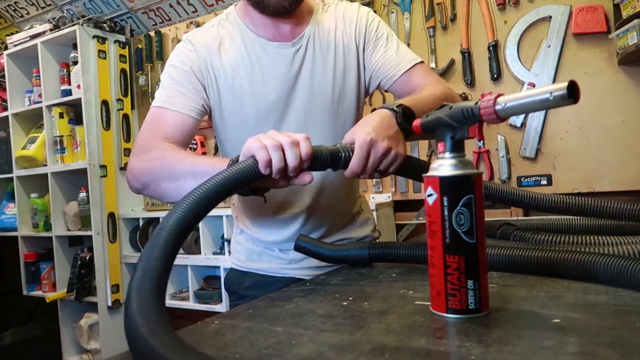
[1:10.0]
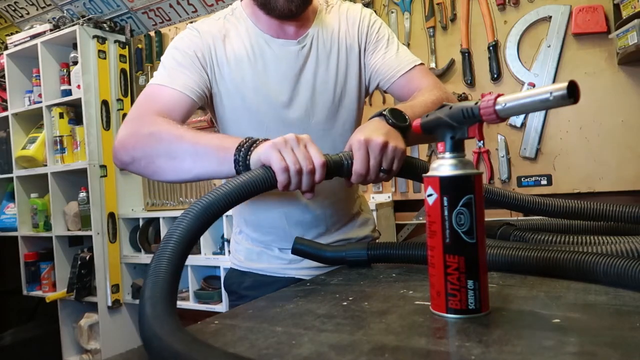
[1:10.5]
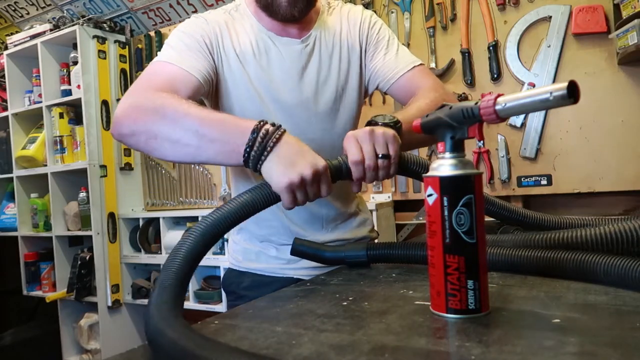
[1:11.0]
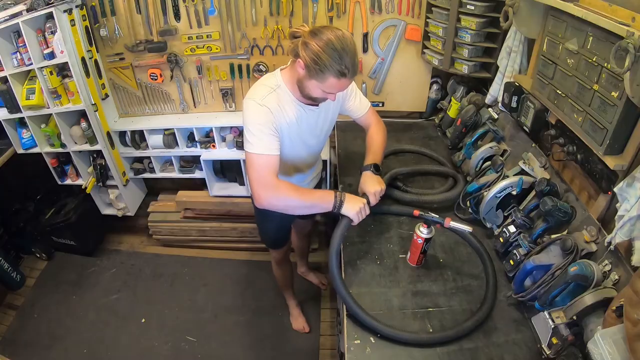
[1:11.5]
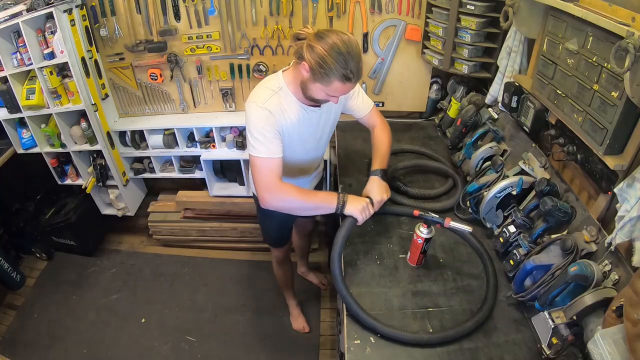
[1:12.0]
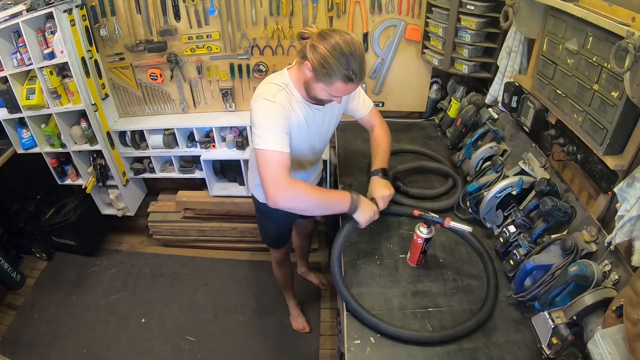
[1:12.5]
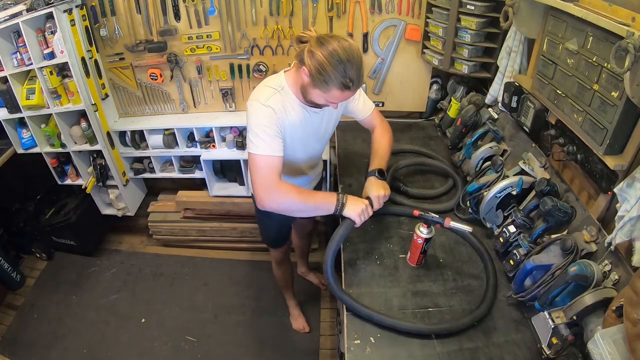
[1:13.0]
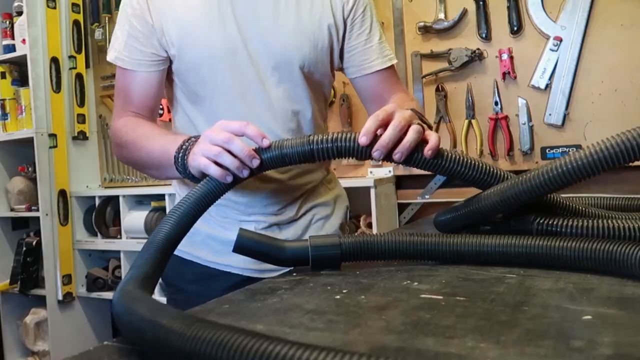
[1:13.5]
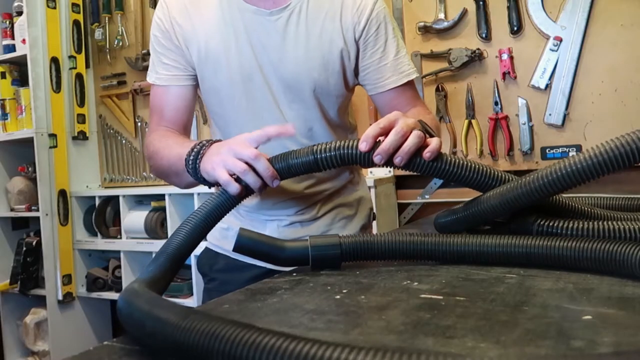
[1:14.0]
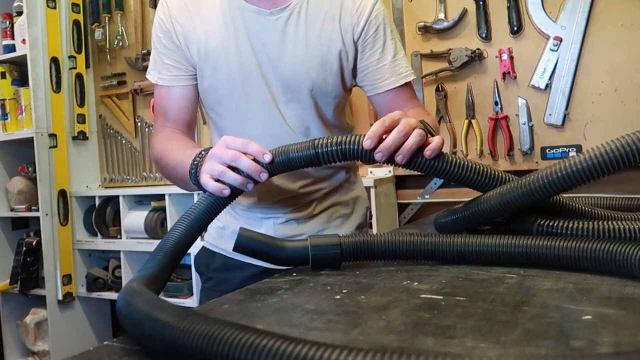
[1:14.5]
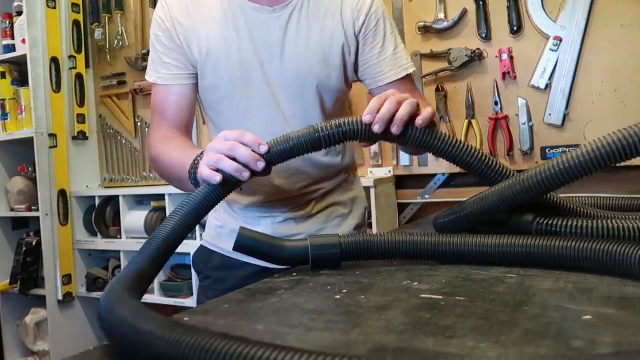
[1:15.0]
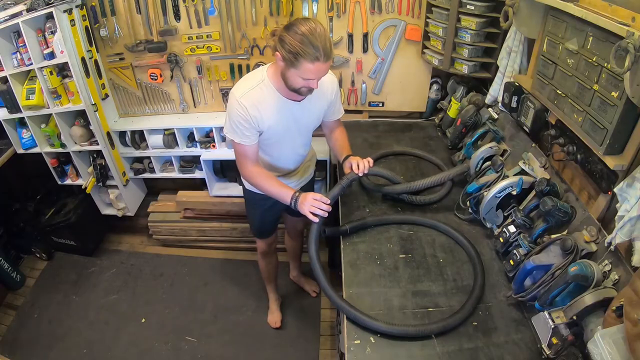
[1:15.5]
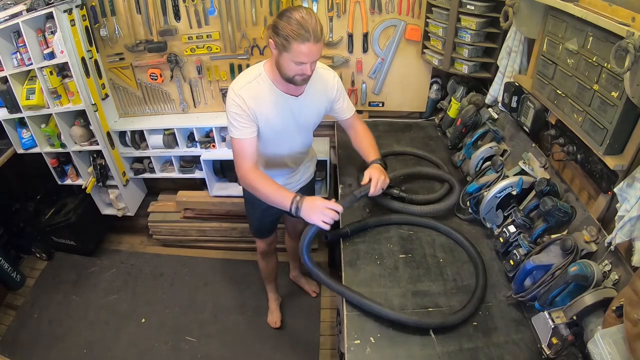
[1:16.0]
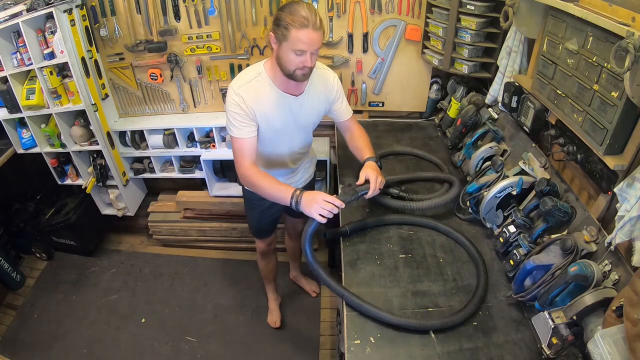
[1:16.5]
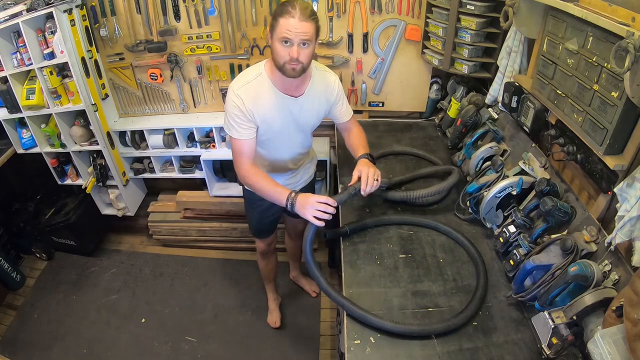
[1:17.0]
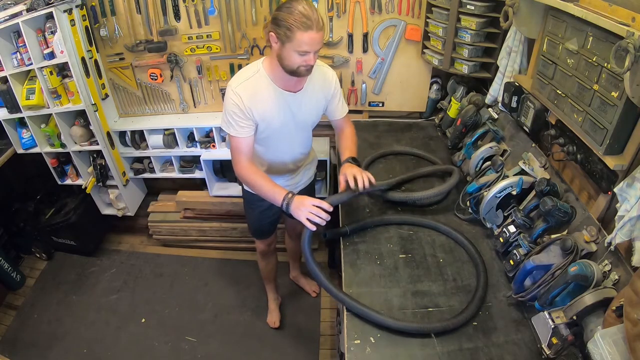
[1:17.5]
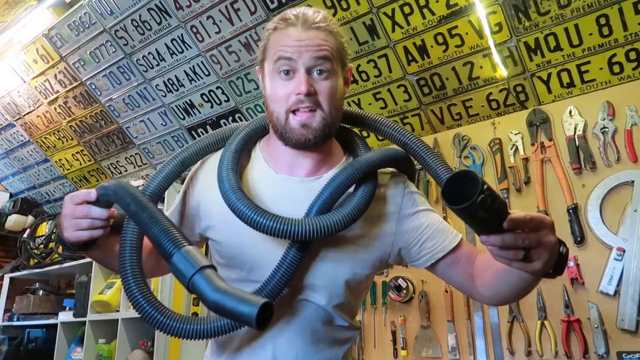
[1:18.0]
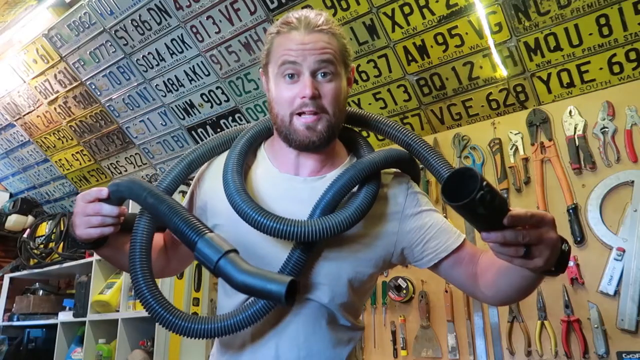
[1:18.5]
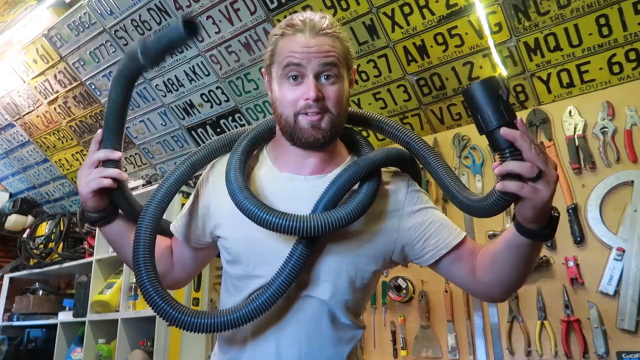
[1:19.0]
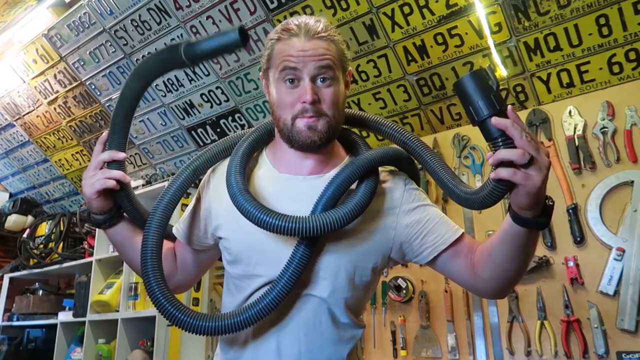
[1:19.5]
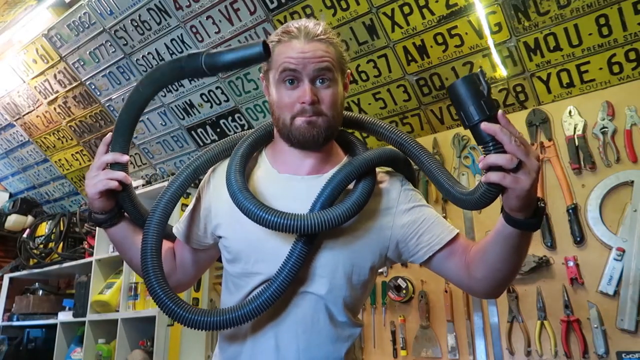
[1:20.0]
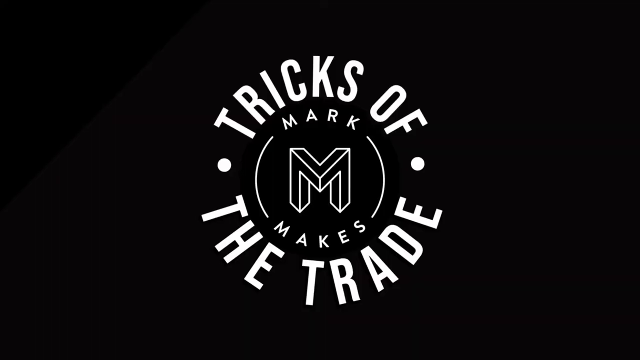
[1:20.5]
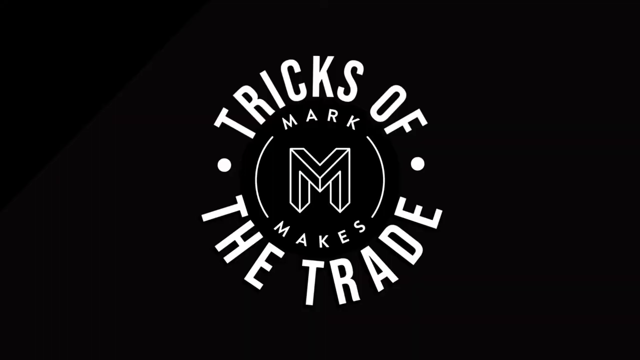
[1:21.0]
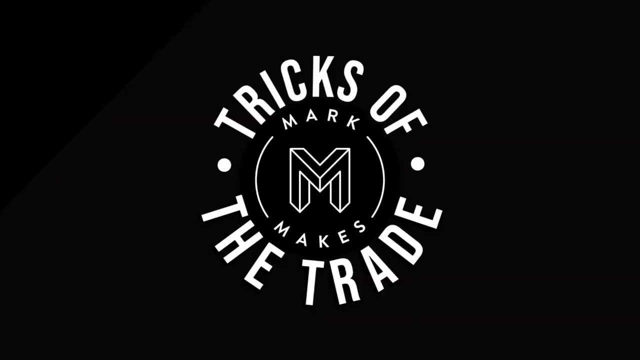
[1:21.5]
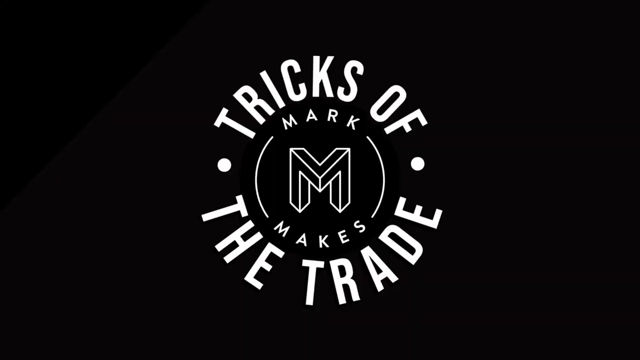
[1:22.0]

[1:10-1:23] The man fits the hoses fully together until the fitting disappears where the two hoses meet, then flexes the joined hose and moves it around to show the camera. It is now one long hose, and he wraps it over his neck. The ending credits read "Tricks of the Trade" from Mark Meeks, with a 3DM in the middle of the logo on a black background. The video is a do-it-yourself tutorial on connecting two hoses together using a blowtorch, super glue, and black fittings.